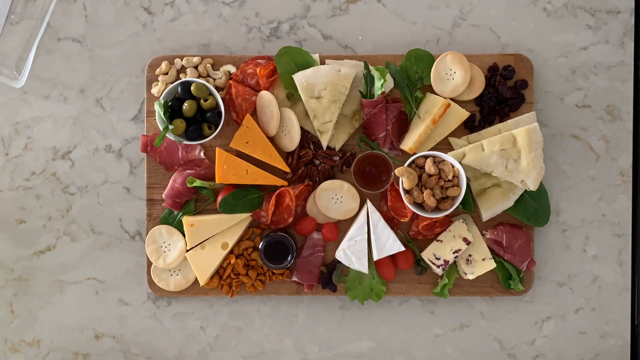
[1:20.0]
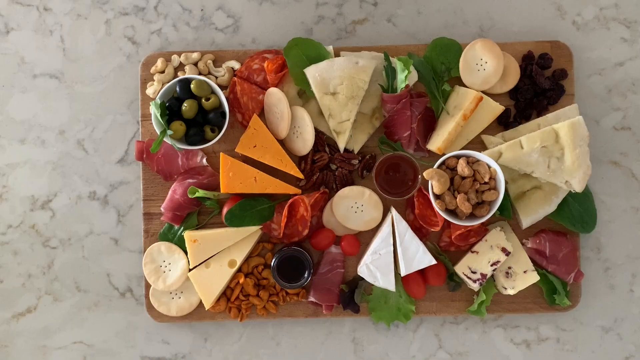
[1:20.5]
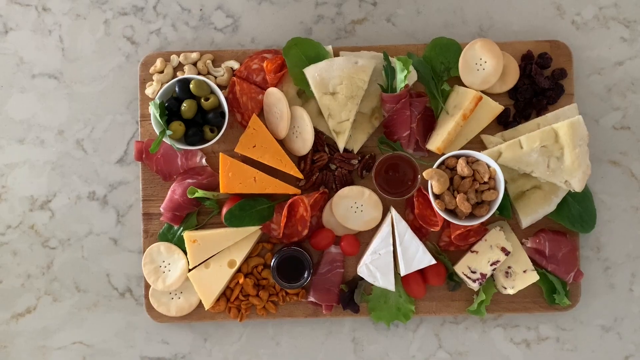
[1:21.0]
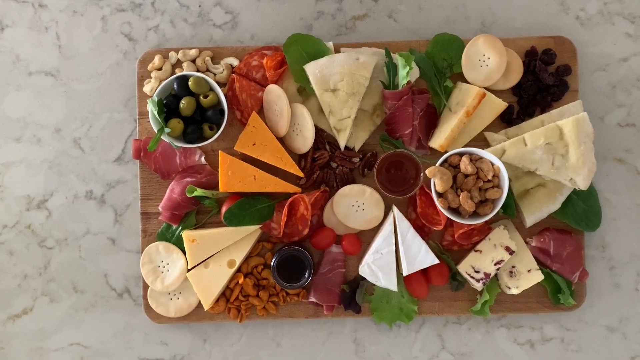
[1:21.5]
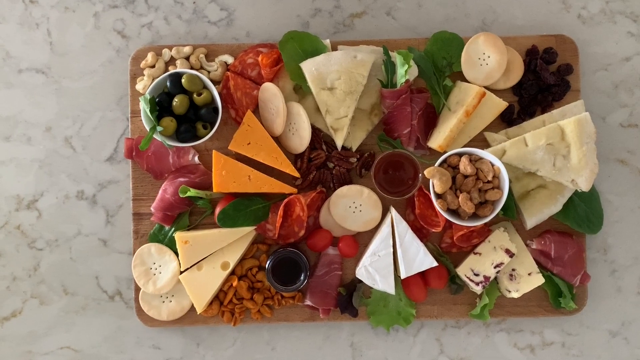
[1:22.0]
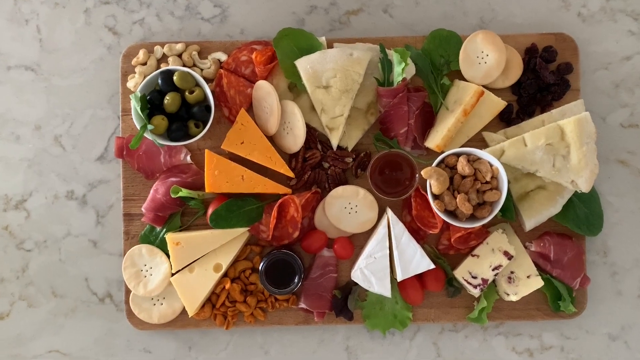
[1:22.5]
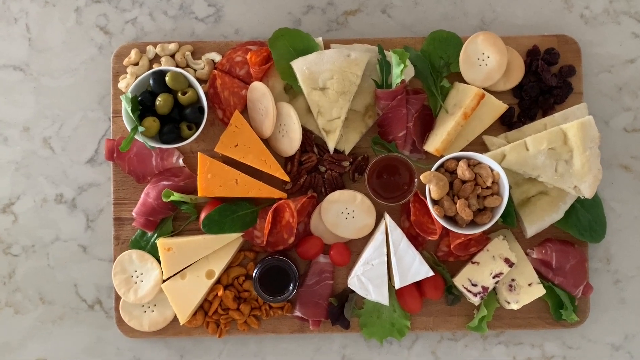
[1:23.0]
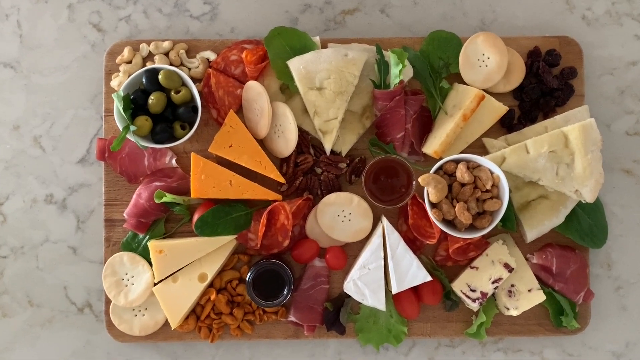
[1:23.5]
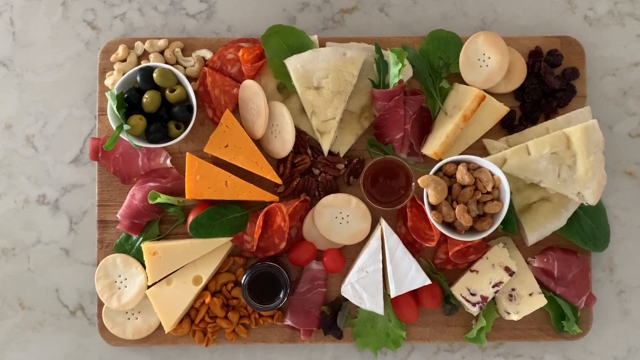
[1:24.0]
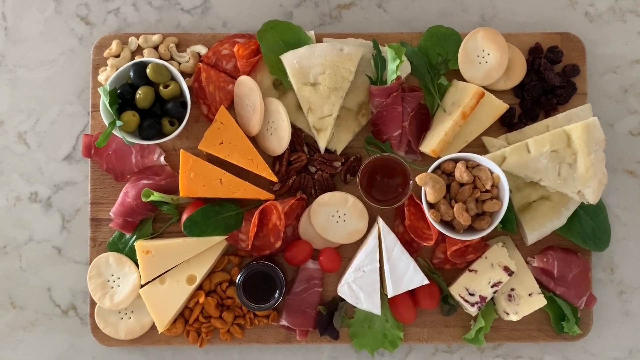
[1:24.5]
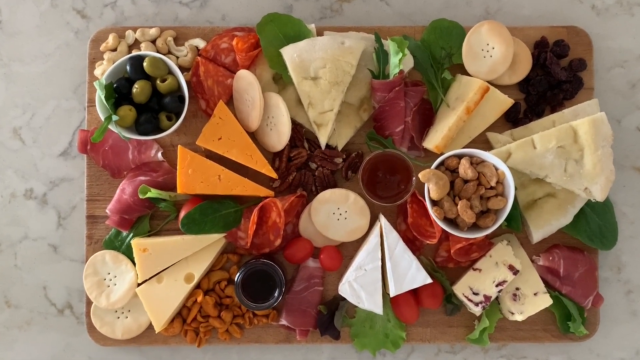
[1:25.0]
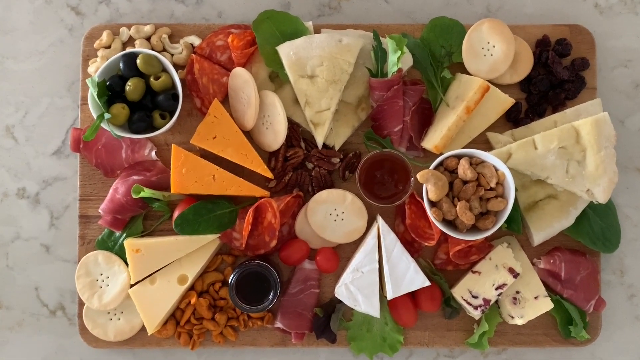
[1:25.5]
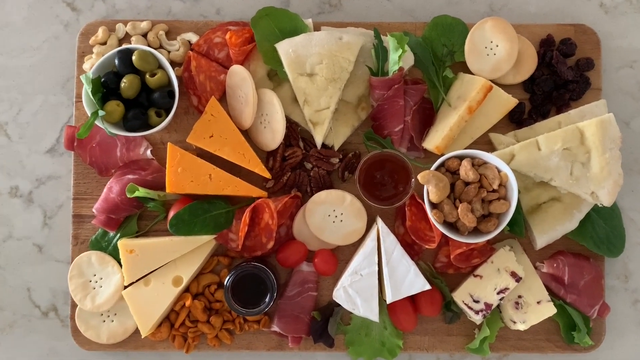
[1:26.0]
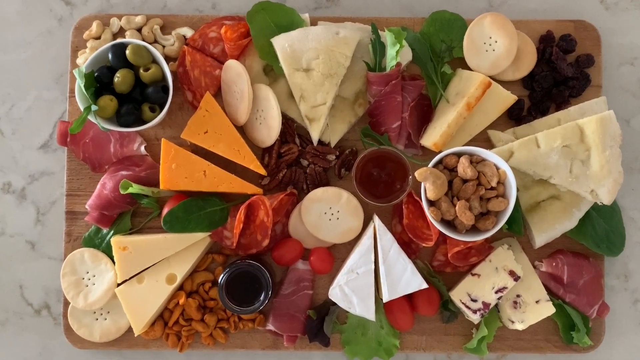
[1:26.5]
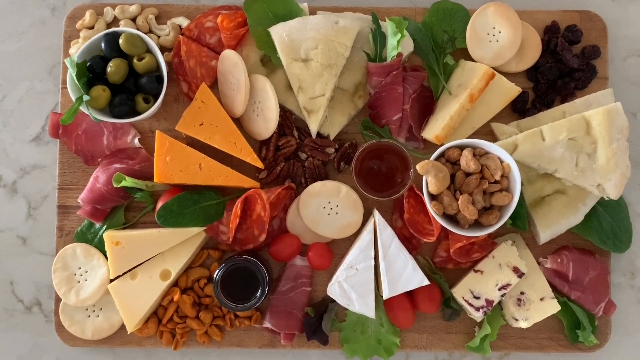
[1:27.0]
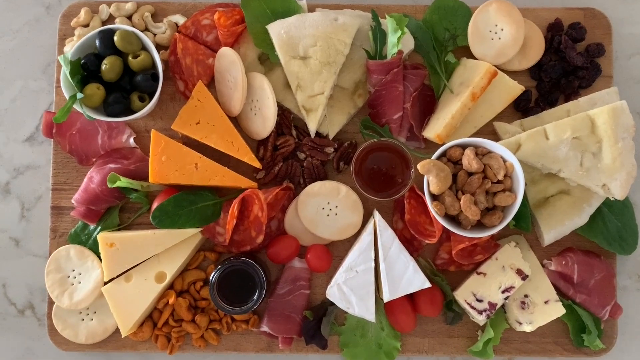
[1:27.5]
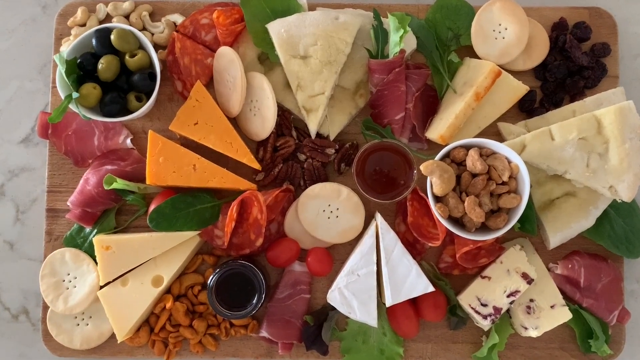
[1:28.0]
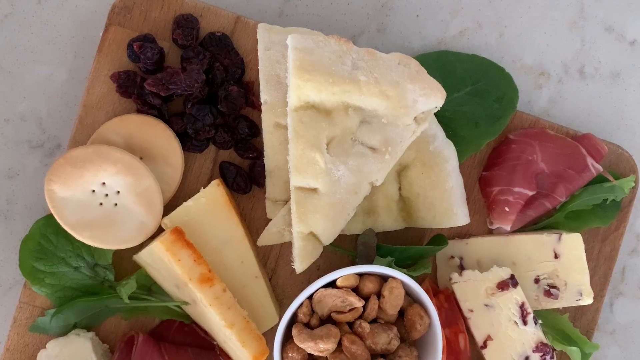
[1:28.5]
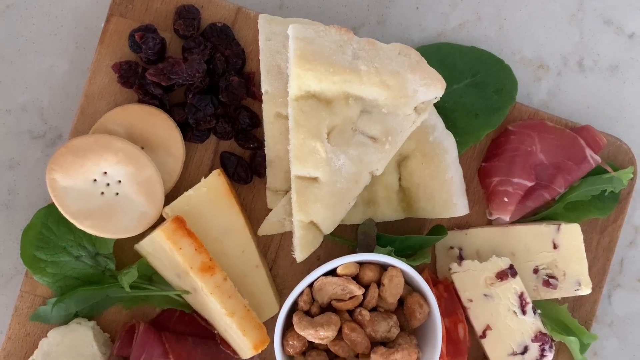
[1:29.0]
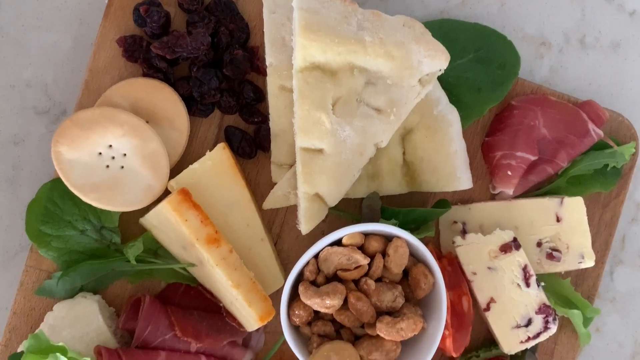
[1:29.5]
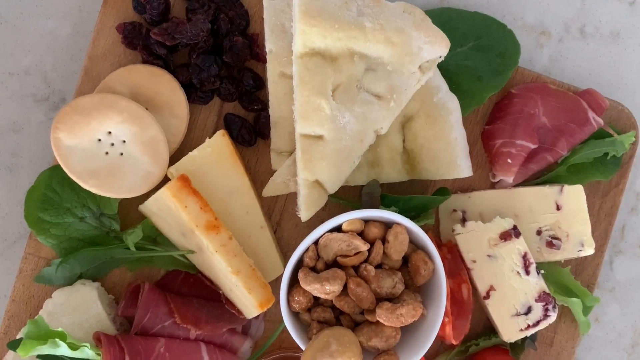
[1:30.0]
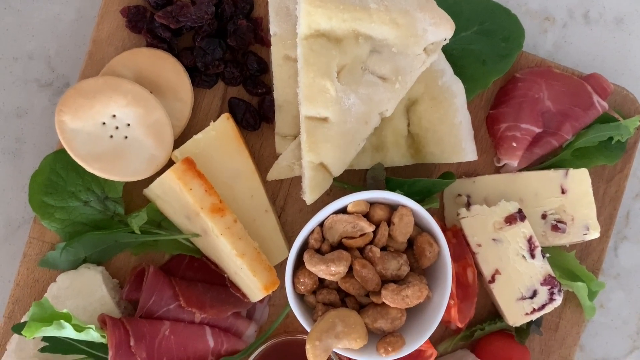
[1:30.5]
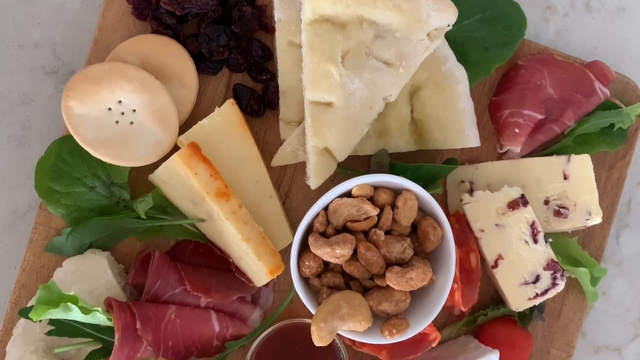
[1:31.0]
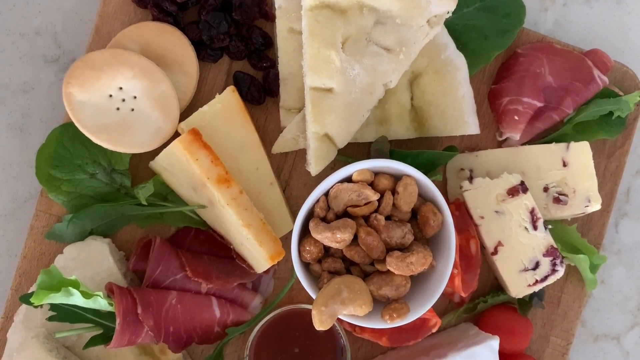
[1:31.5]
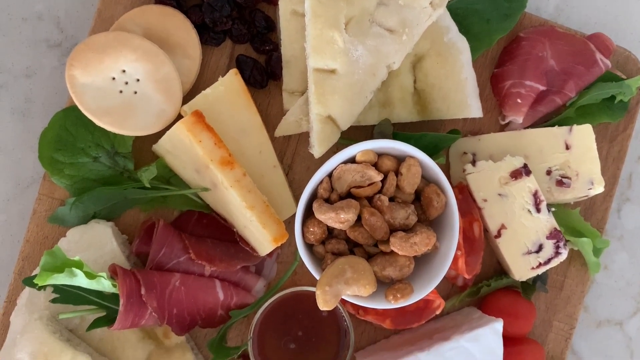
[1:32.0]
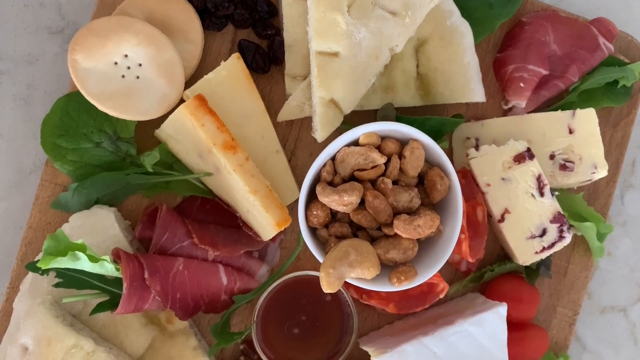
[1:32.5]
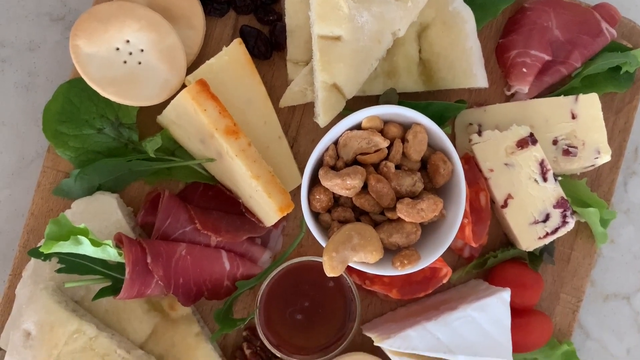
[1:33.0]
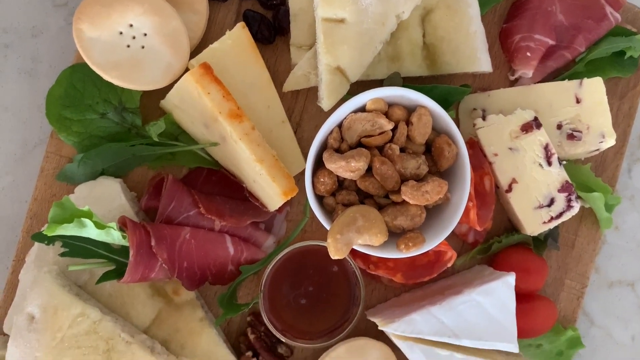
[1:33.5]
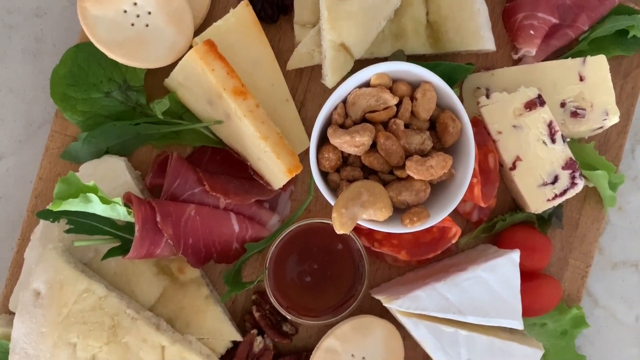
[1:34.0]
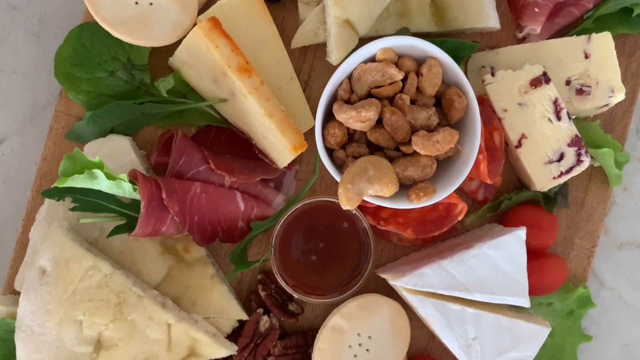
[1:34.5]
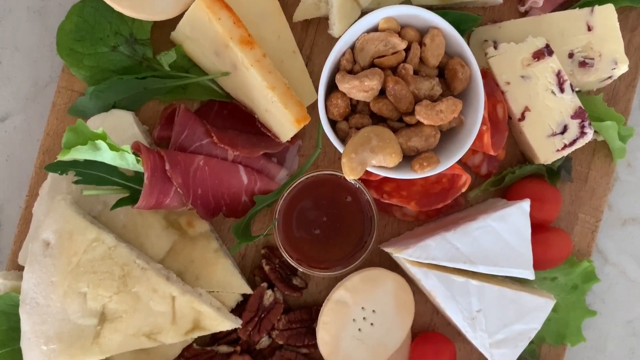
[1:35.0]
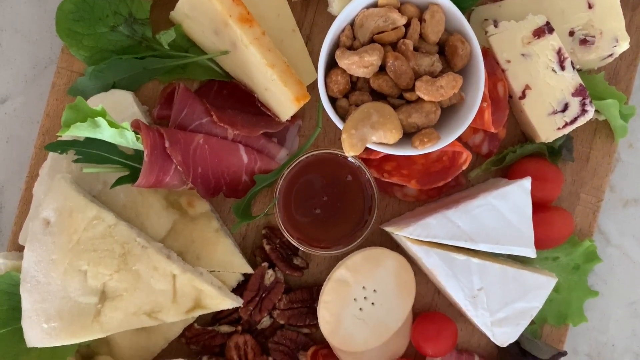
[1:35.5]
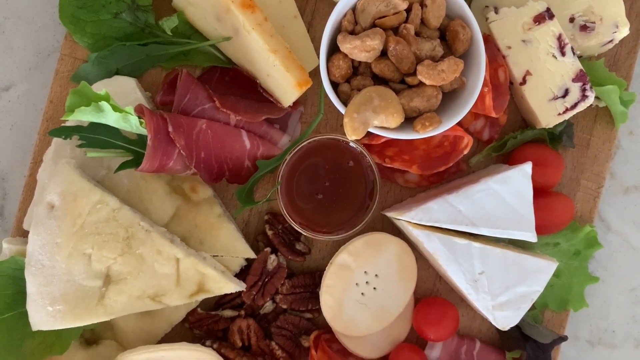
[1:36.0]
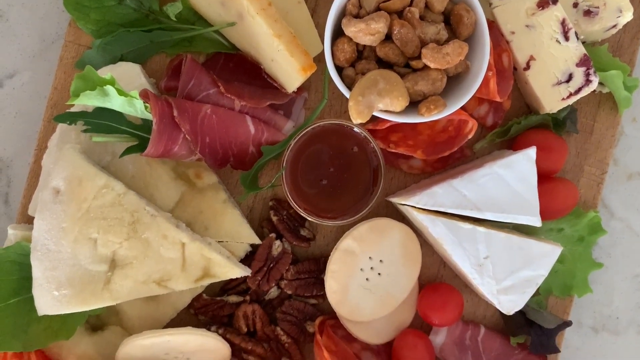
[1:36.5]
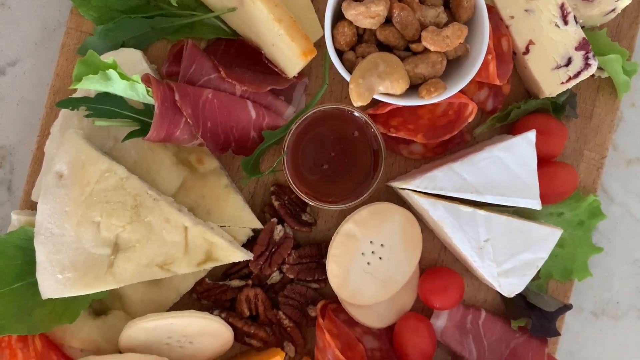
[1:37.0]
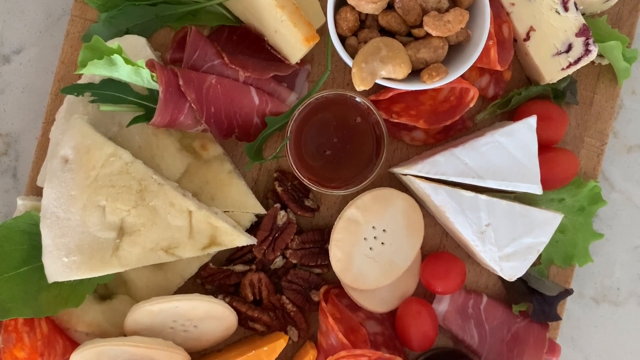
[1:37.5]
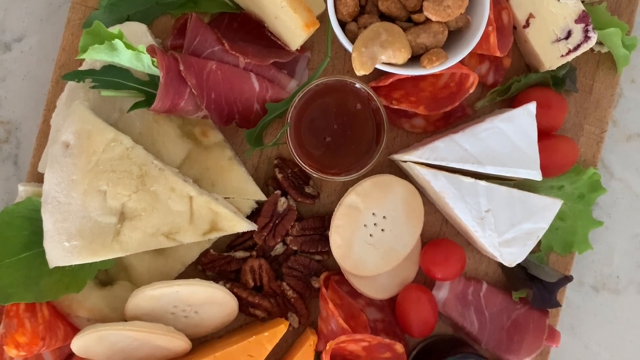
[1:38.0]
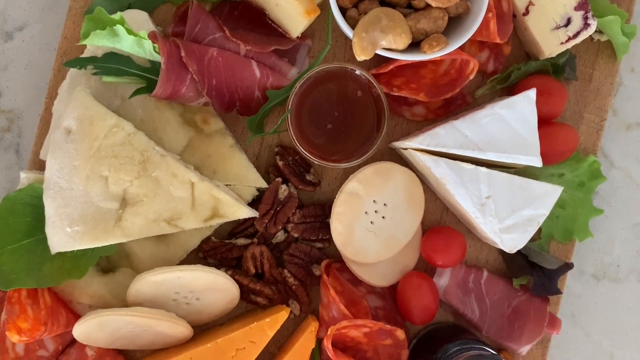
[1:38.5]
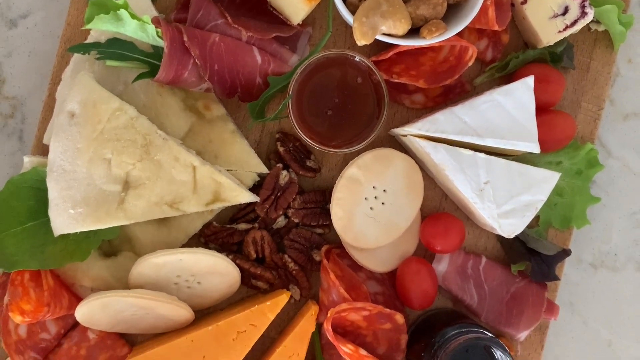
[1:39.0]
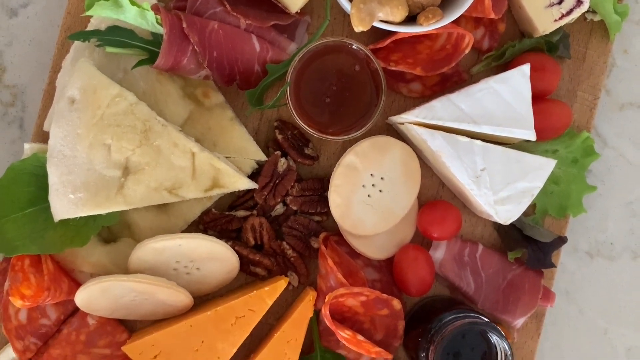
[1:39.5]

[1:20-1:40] The platter is complete, holding cheeses, deli meat, nuts, vegetables, pita bread, crackers, olives, cashews and raisins. Lettuce is laid around the cutting board as garnish. The video zooms in on the details of the platter, then goes into slow motion at an overhead angle, showing again that the cheeses are cut into triangles, as are the slices of pita bread. The crackers and garnish are placed in a design so each piece is visible. Mixed olives are in a small dipping cup, and cashews and mixed nuts are in another small dipping cup.